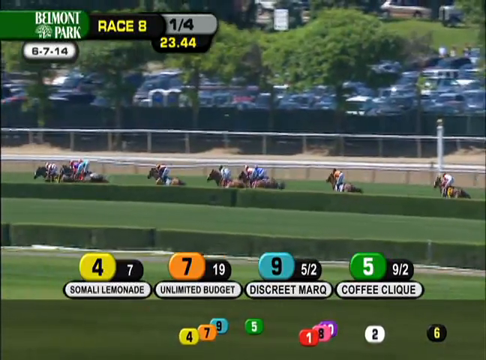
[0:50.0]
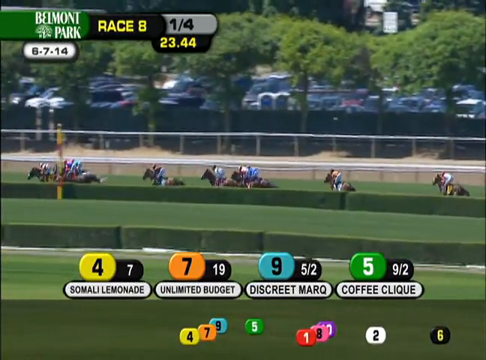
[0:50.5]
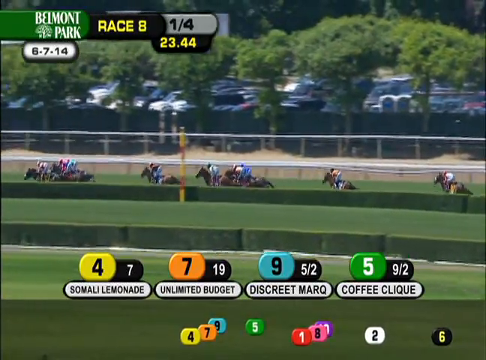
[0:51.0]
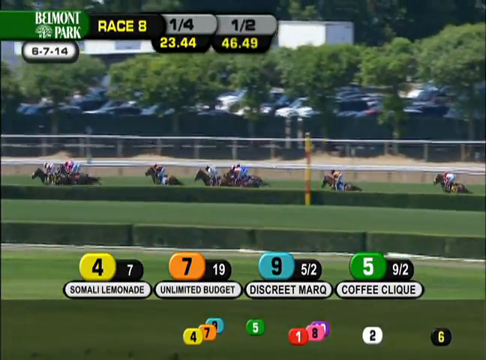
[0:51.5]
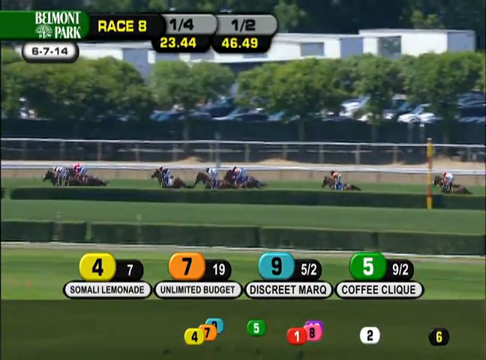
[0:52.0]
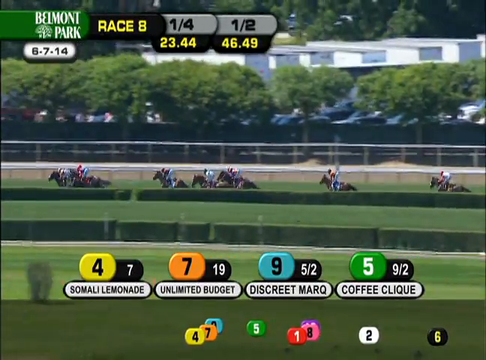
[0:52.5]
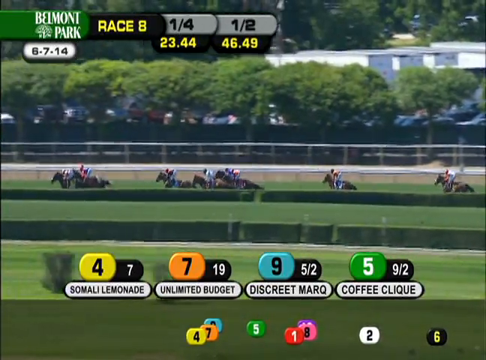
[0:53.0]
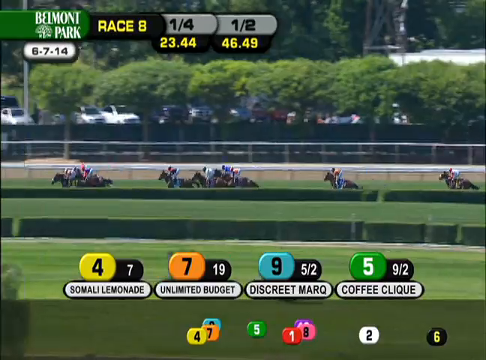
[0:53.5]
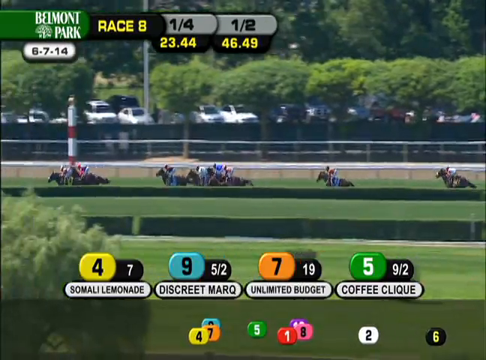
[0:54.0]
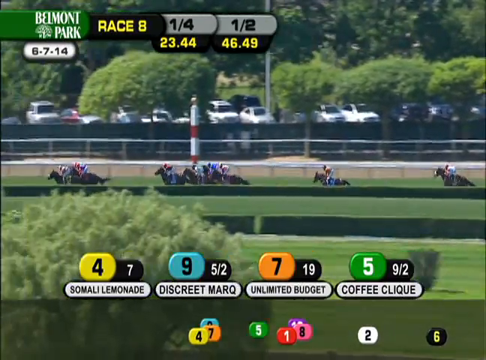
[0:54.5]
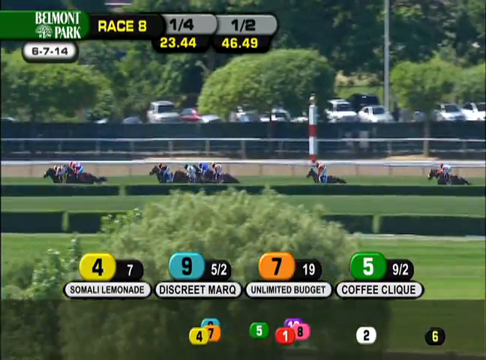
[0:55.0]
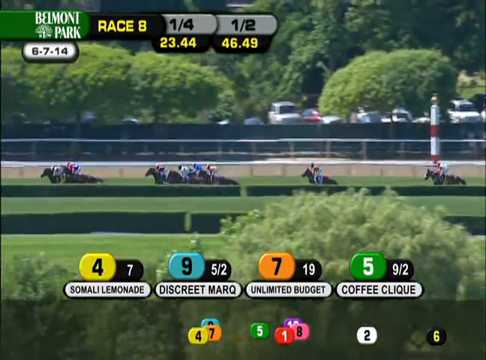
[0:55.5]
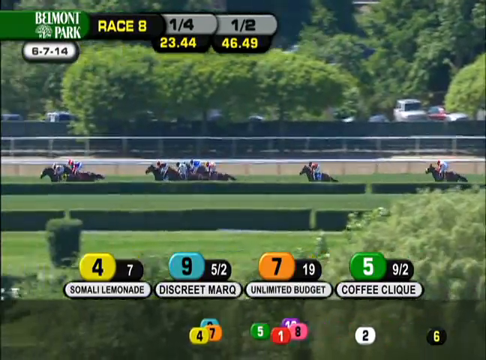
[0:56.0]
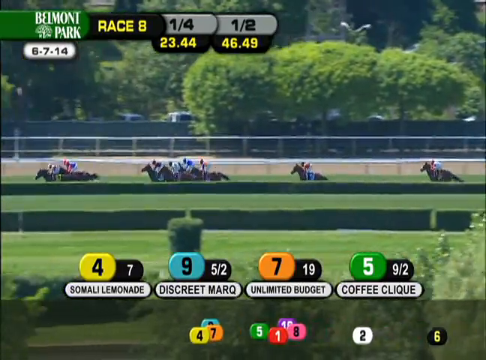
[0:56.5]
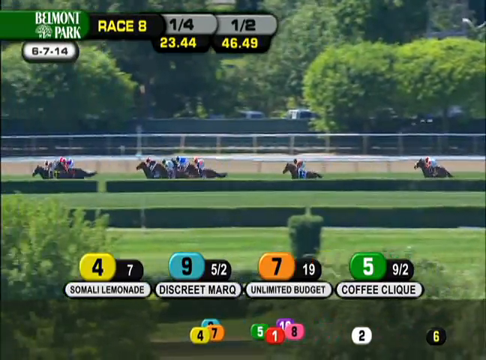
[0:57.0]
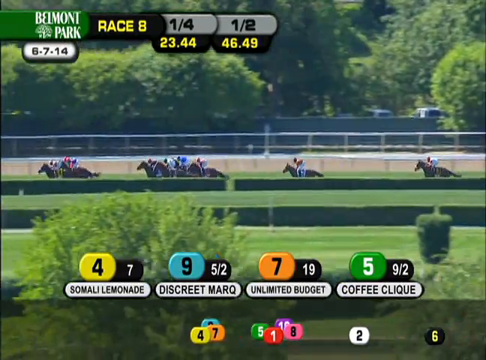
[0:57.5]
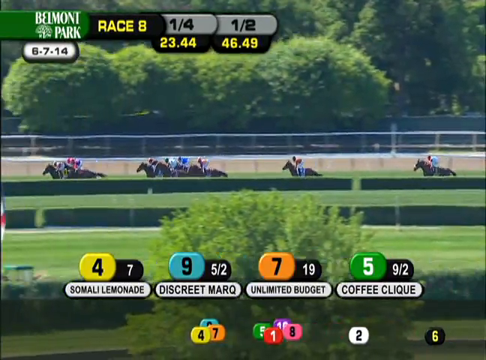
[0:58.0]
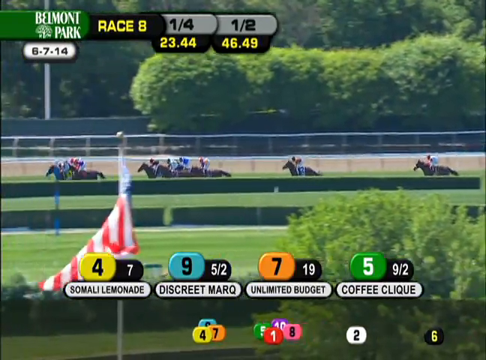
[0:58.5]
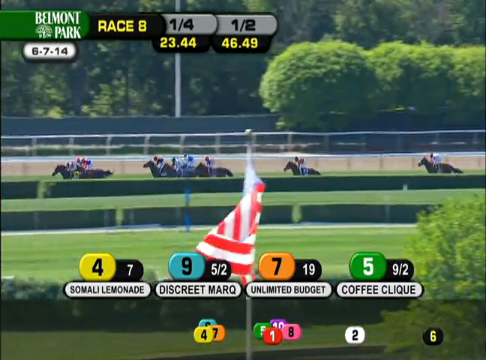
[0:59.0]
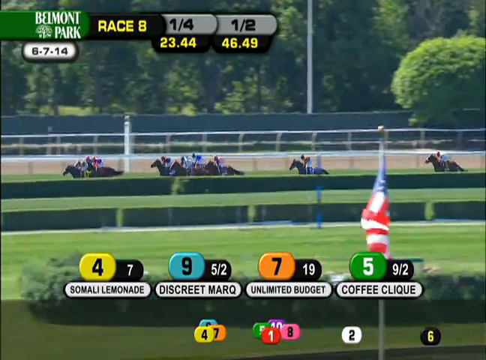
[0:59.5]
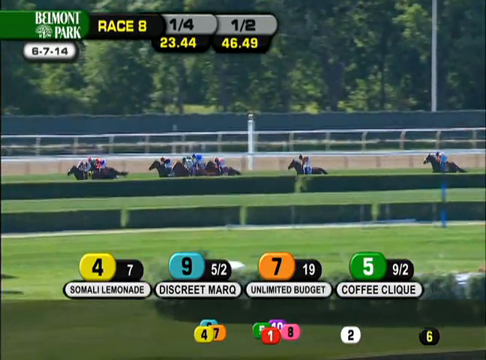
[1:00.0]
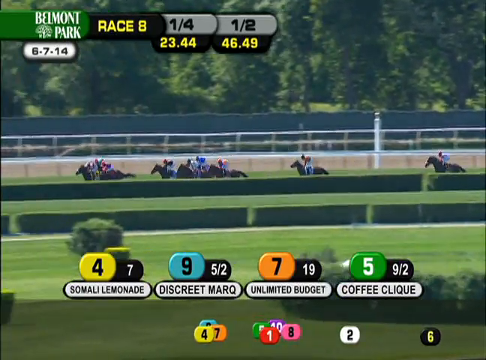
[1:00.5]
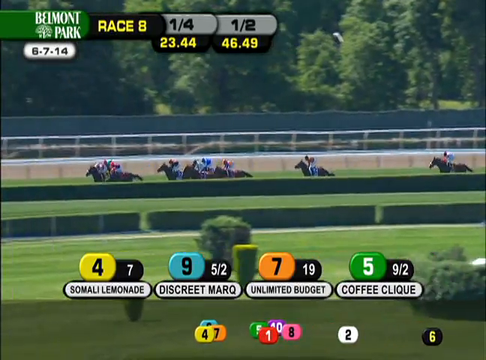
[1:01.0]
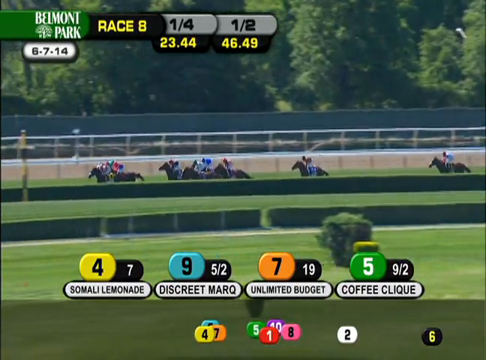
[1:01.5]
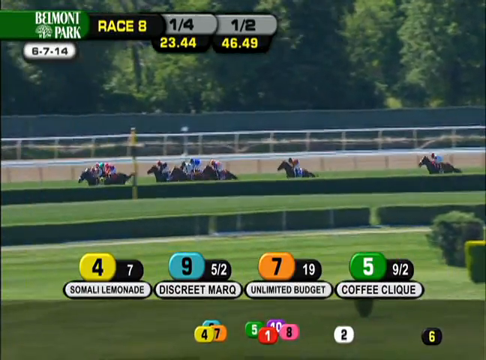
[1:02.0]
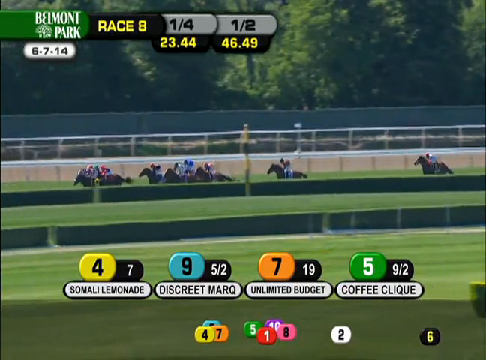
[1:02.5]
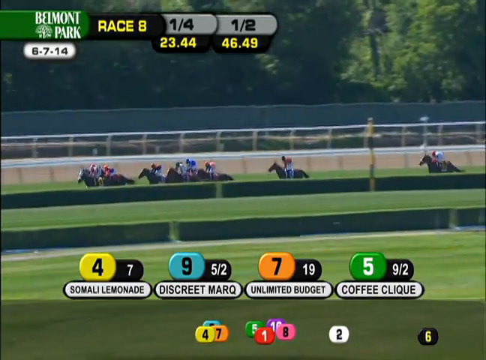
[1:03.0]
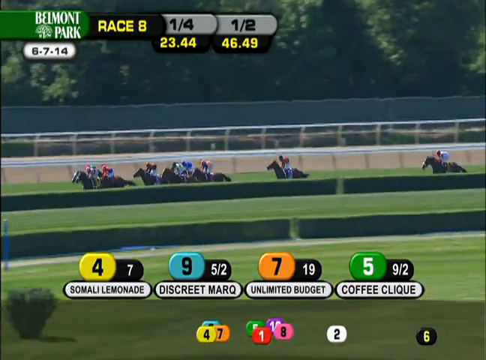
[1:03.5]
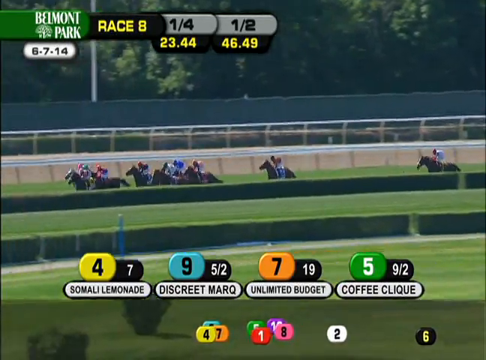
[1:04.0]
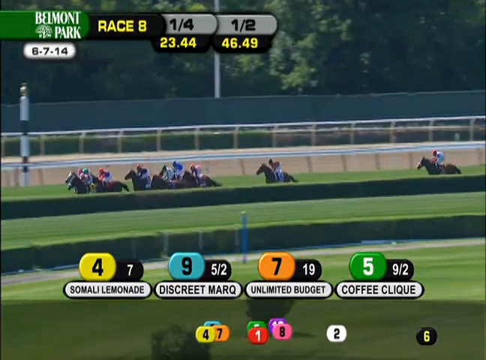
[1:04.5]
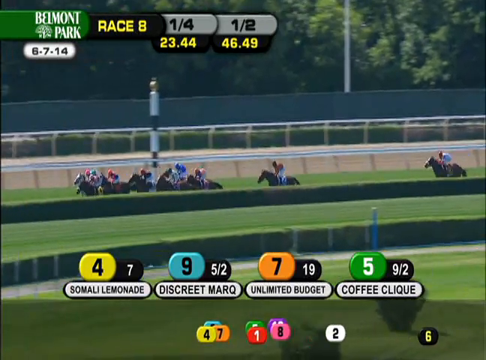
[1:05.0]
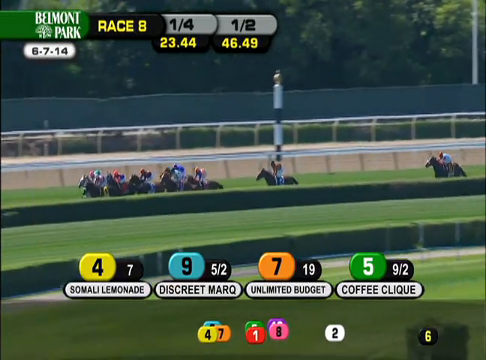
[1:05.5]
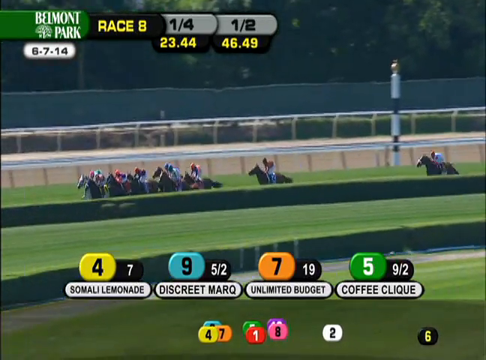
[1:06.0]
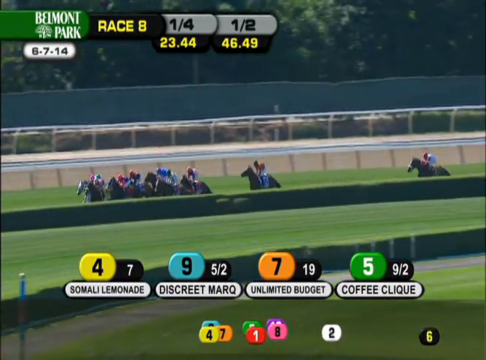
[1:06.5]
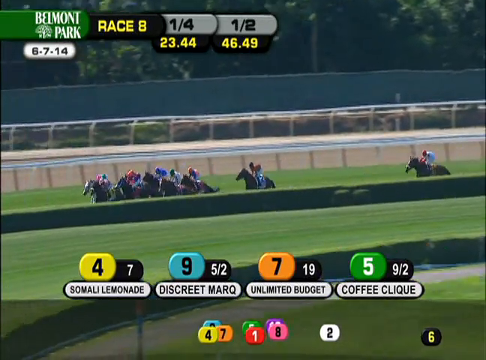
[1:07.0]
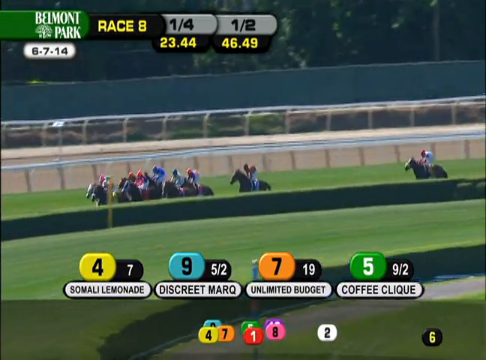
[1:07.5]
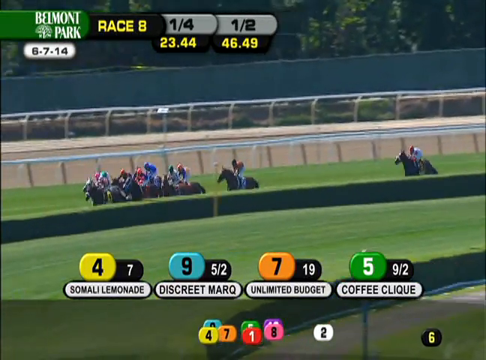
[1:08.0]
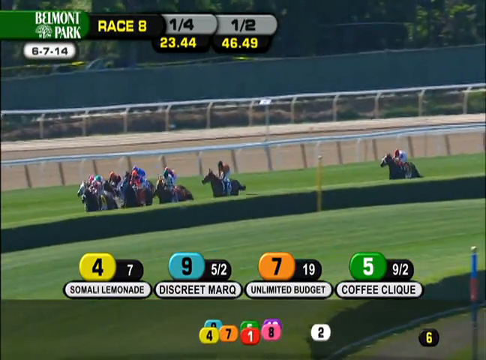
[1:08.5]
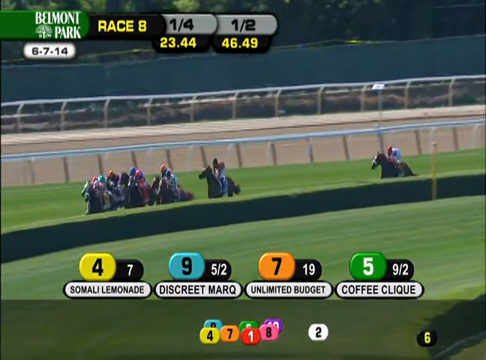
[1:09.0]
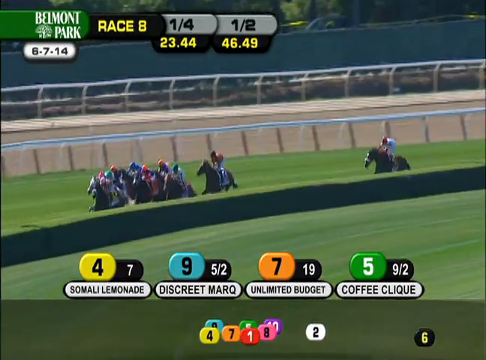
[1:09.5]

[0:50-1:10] The race at Belmont Park on June 7, 2014, race number 8, continues with 10 horses. At the bottom of the screen, icons for all 10 horses are displayed as a graphic, moving back and forth and getting closer and farther from each other based on the horses' actual positions. The top four horses are displayed as their own graphic with names: horse number 4, Somali Lemonade, leads the pack in first place; horse number 7, Unlimited Budget, is second; horse number 9, Discreet Mark, is third; and horse number 5, Coffee Click, is fourth. The horses run down the racetrack, passing trees, grass, shrubs, and a large American flag in the foreground. They continue down the straightaway with Somali Lemonade still in the lead.